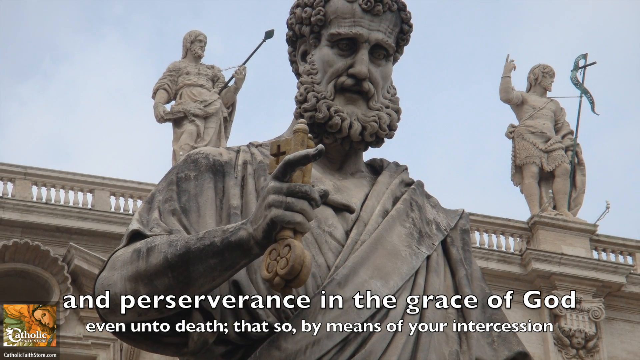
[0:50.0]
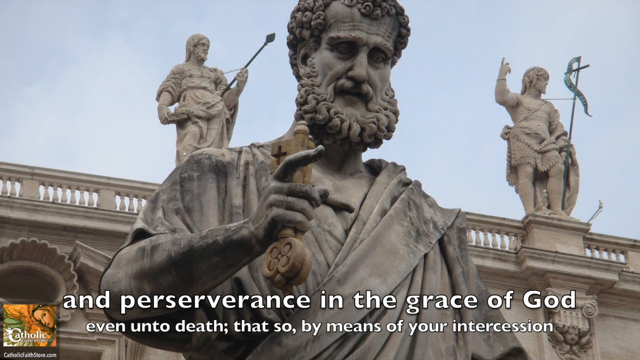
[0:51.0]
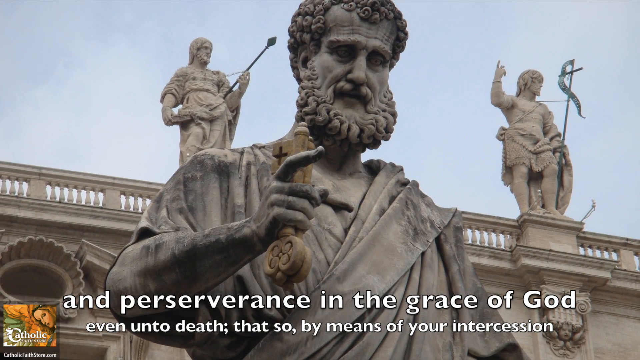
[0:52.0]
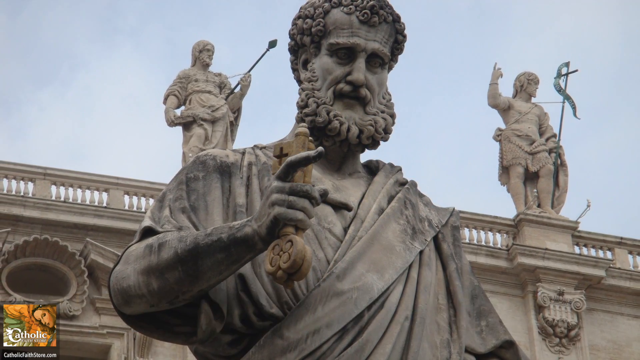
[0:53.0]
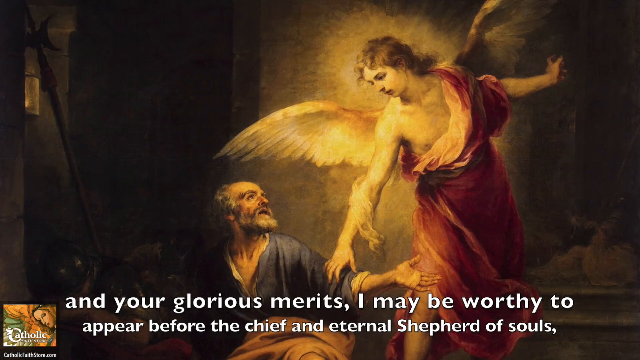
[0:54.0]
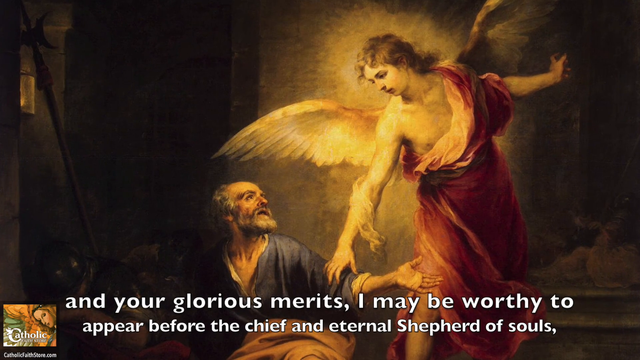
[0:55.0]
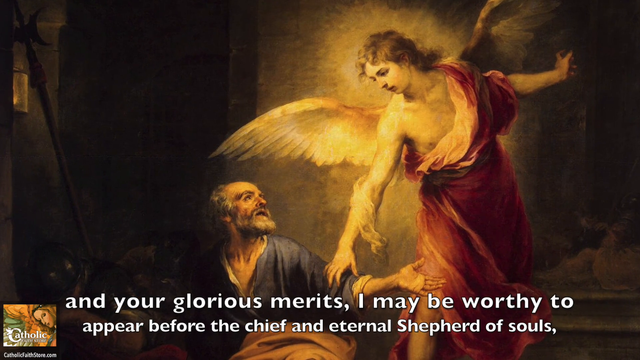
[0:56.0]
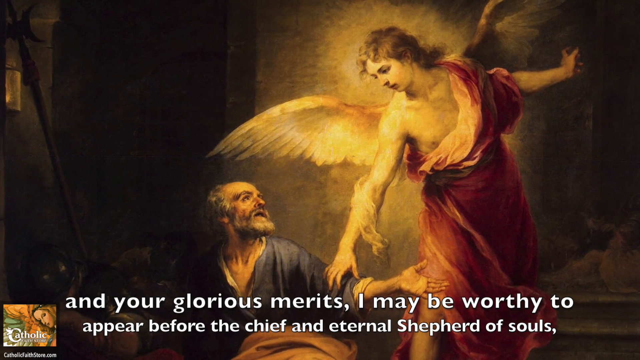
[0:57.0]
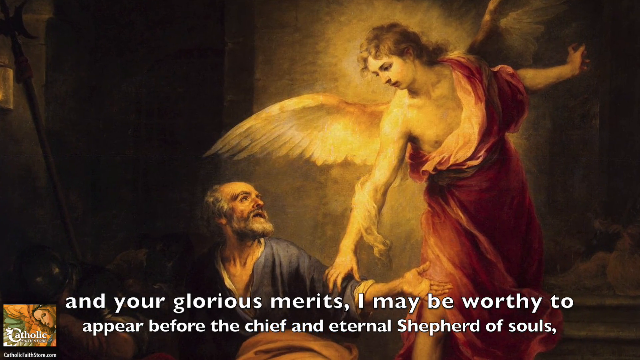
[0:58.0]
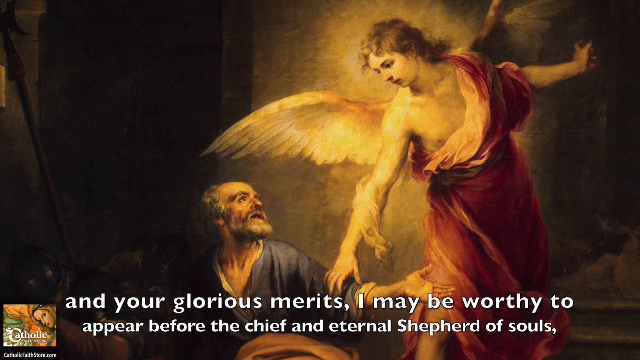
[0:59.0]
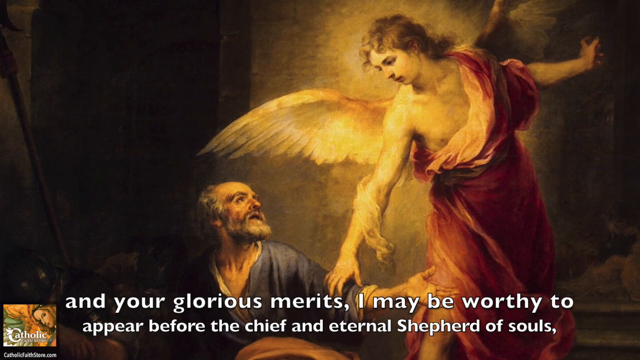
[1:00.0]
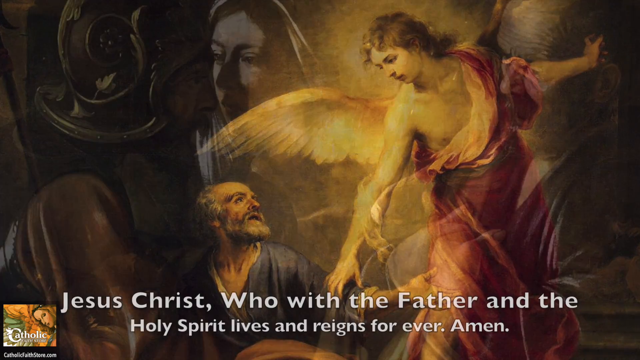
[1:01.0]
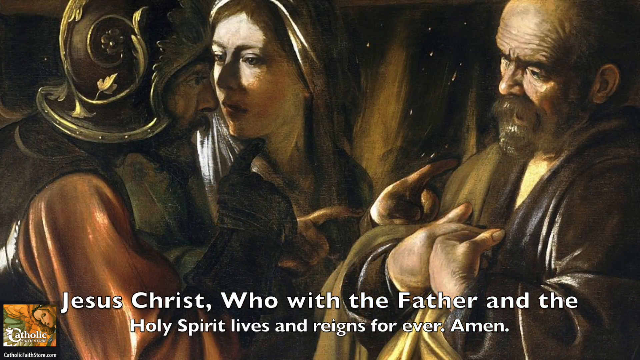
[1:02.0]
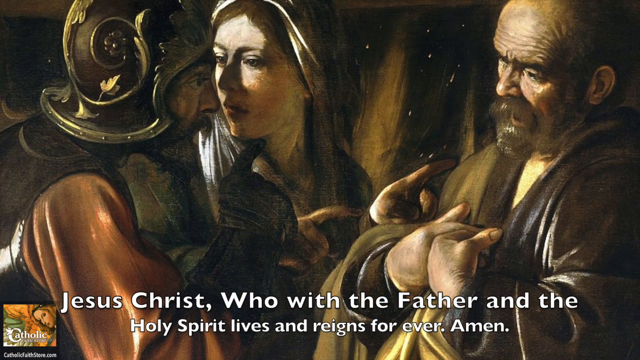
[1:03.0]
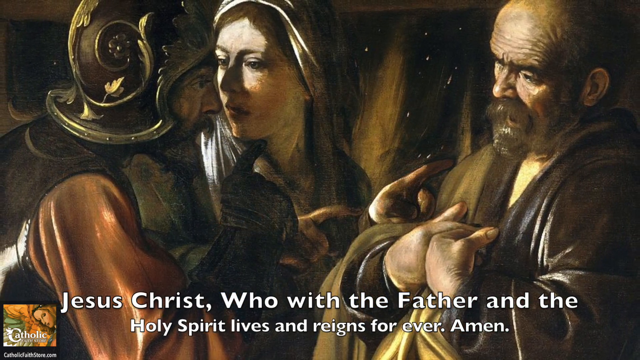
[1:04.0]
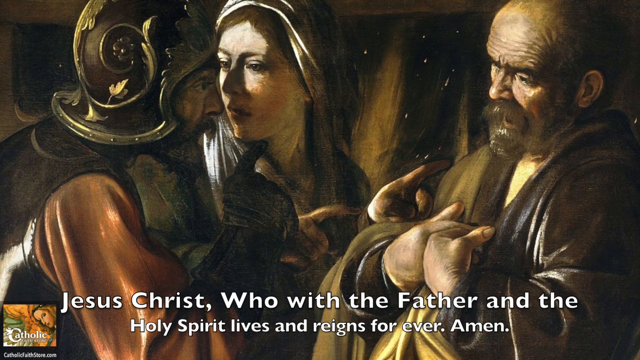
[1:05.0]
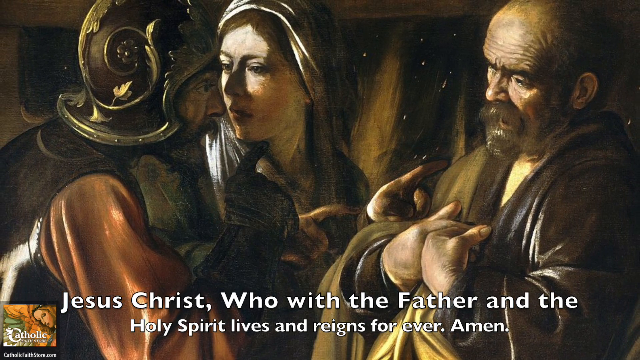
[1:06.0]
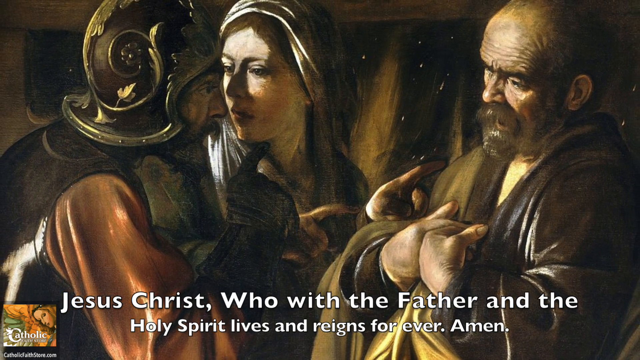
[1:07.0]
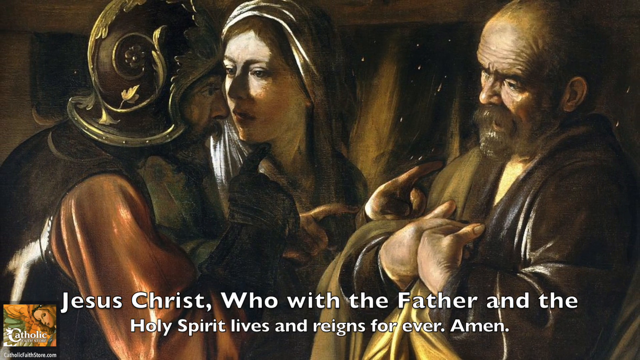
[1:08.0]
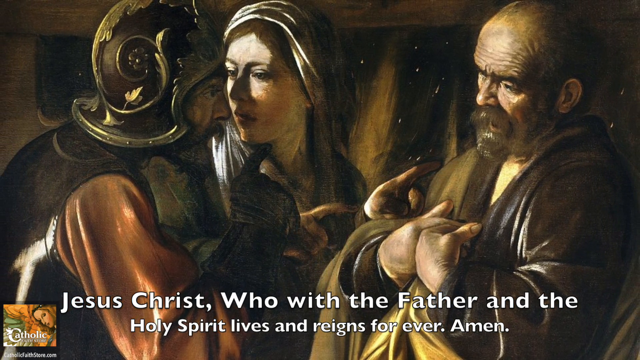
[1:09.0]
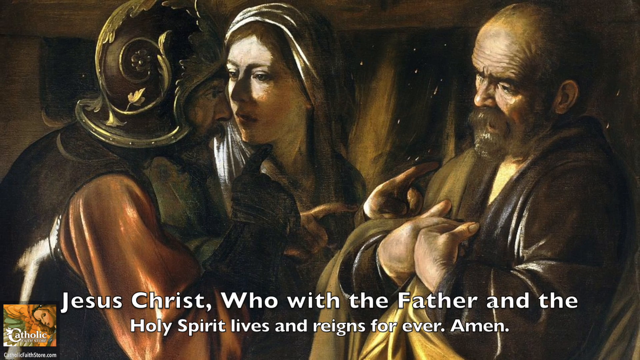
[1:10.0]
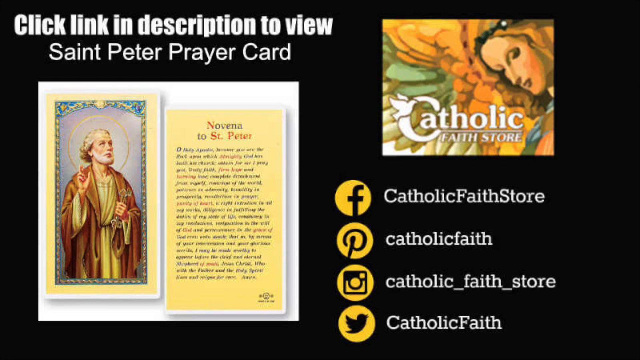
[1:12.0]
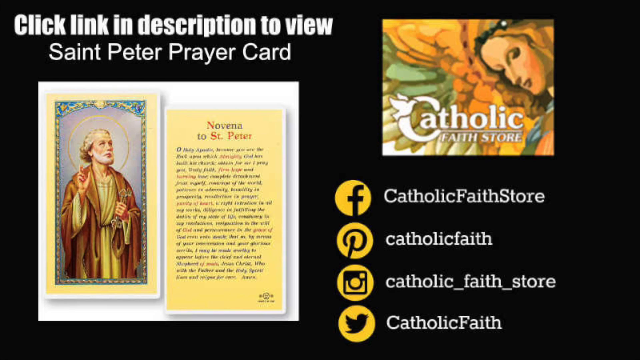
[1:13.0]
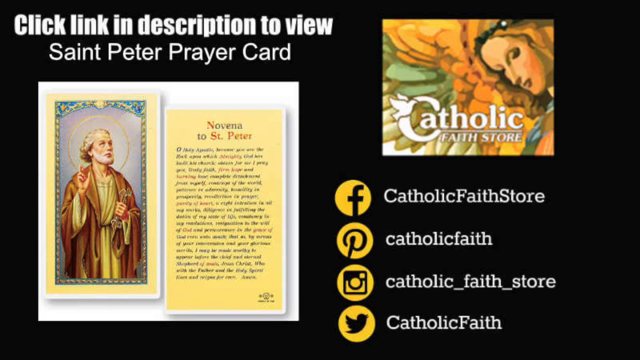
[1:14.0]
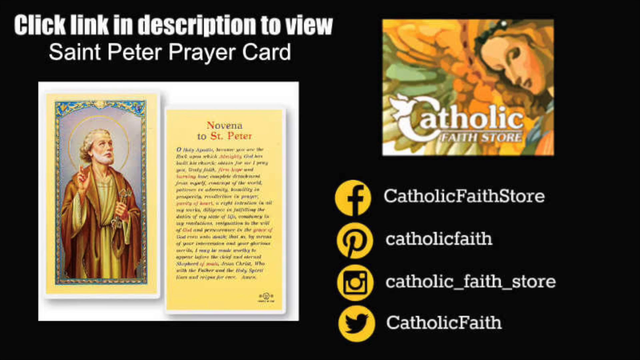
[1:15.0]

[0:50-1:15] A statue appears that looks very large and is probably marble. It looks like it is outdoors, since a building is visible behind it. The statue holds up a key in its right hand at about chest height, its hand gripped around the key except for the pointer finger, which points outward as if pointing at something. The statue has a curly beard and curly hair on its head. White text at the bottom reads, "and perseverance in the grace of God even unto death. That's so by means of your intercession." In the building behind the statue, two more statues are perched up high. Next comes a painting with what looks like an angel on the right. The angel wears a red robe that comes up over its left shoulder and goes down under its right shoulder, leaving the right shoulder bare. Its left hand is held out straight behind it while it leans to its right and reaches down with its right hand, putting it on the left upper arm of a man sitting on the ground next to it. The man holds out his left hand, palm upwards, as if to receive the angel's blessing; his head is tilted back and turned off to the left as he looks up at the angel, and his body faces the viewer.